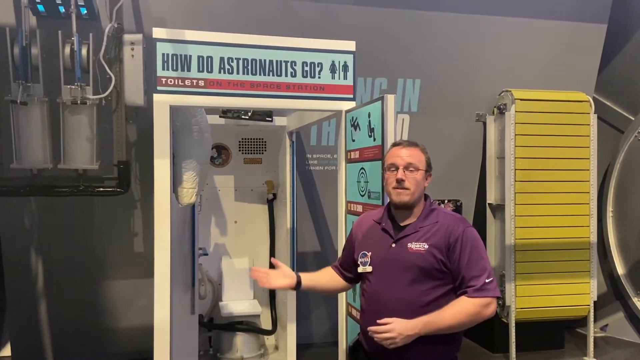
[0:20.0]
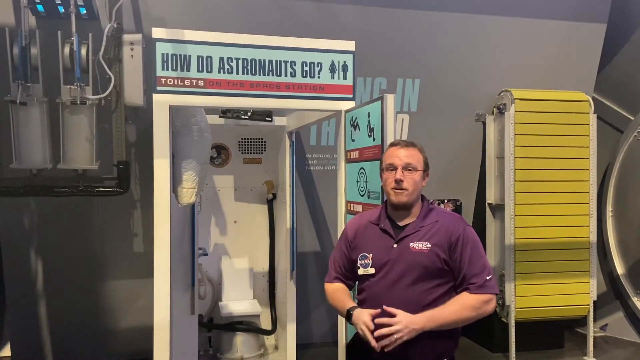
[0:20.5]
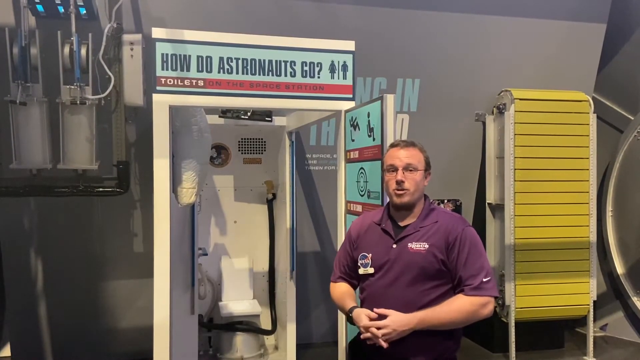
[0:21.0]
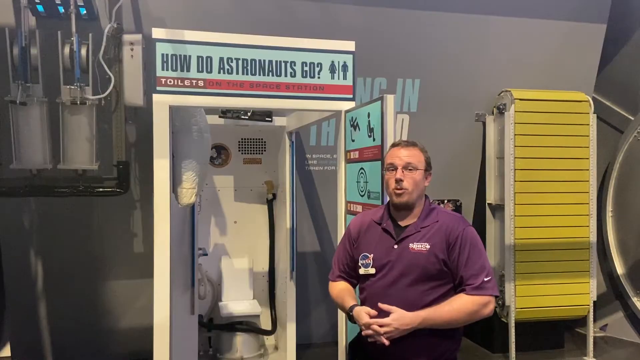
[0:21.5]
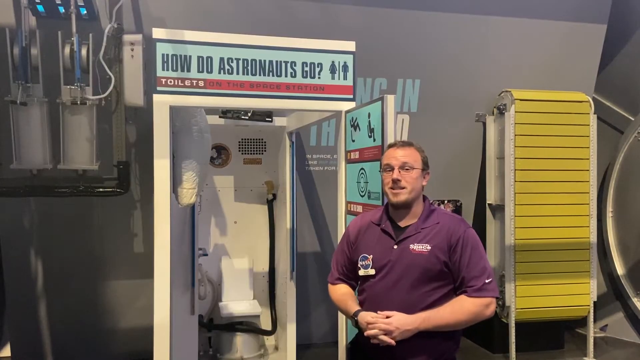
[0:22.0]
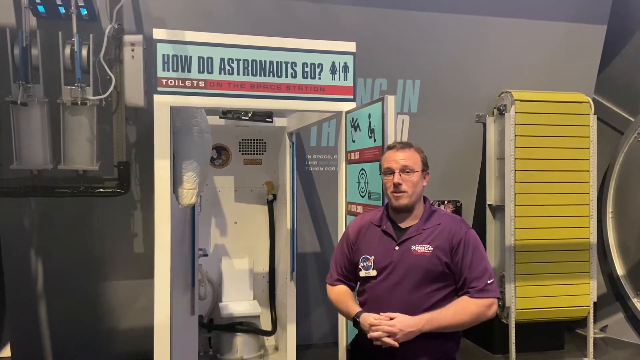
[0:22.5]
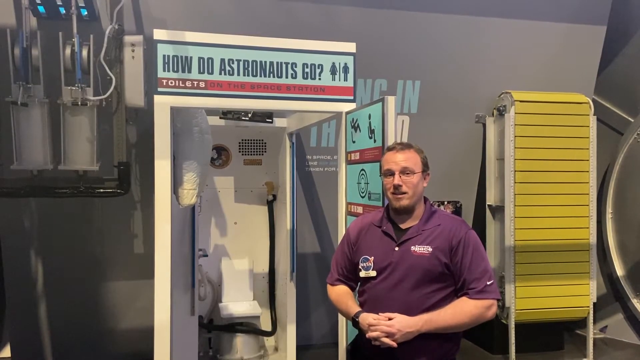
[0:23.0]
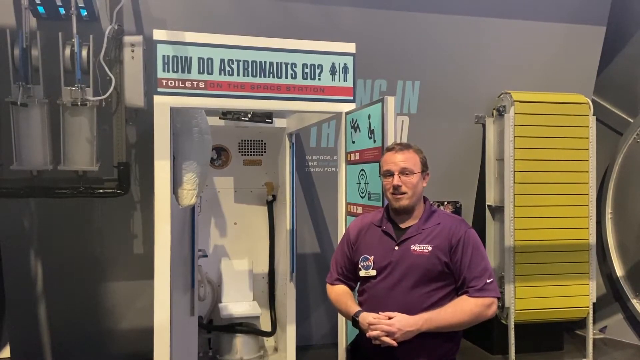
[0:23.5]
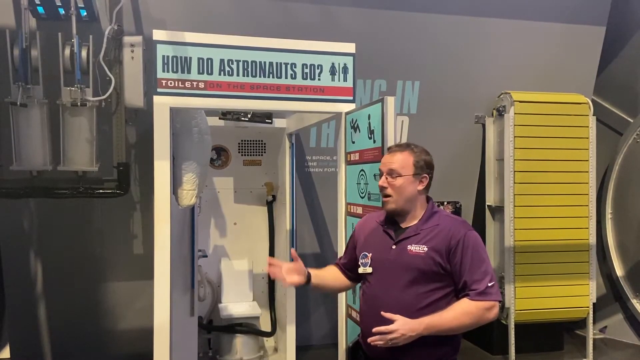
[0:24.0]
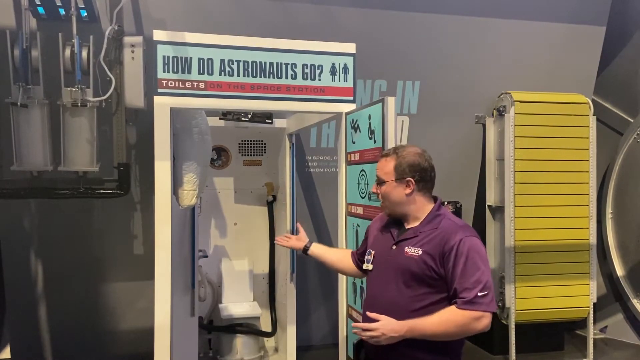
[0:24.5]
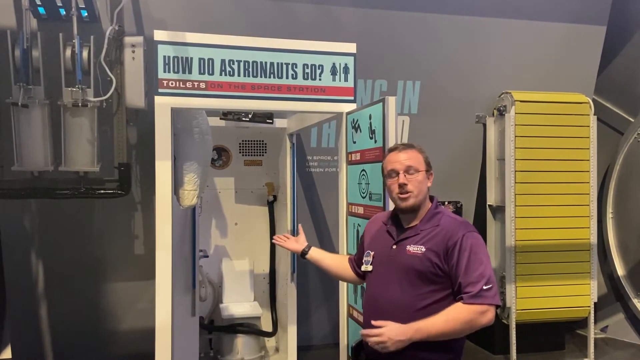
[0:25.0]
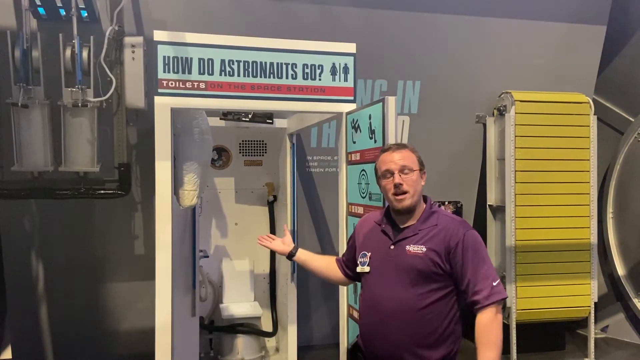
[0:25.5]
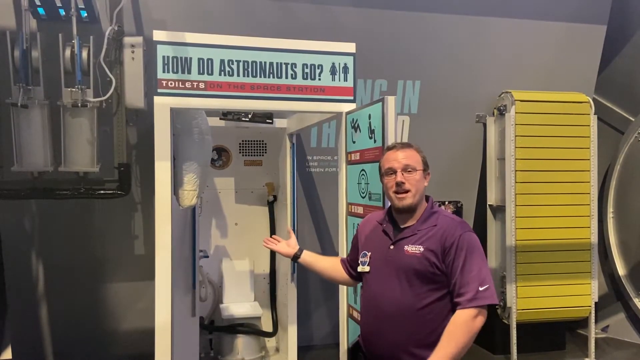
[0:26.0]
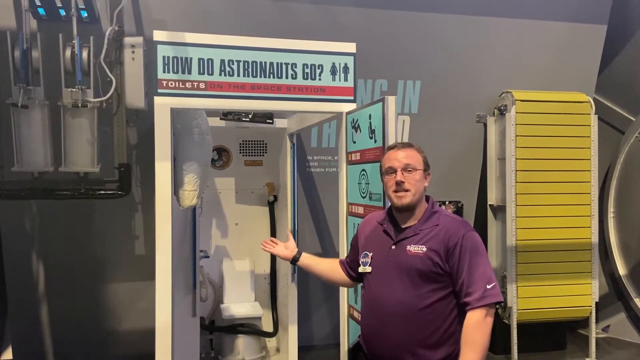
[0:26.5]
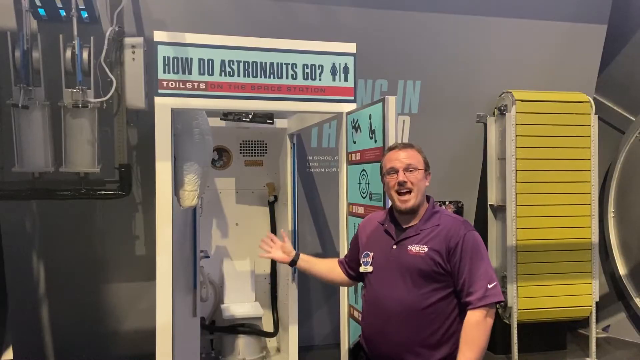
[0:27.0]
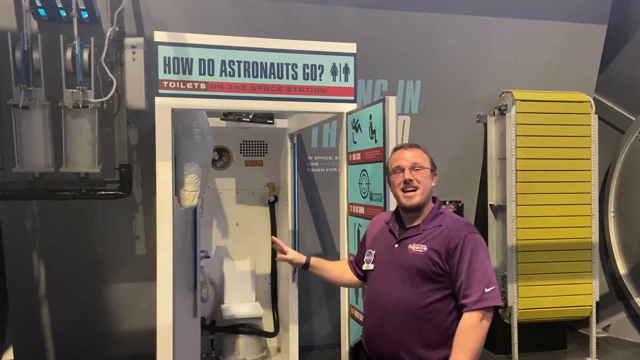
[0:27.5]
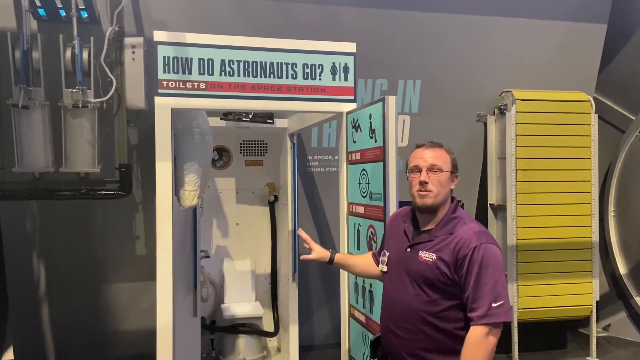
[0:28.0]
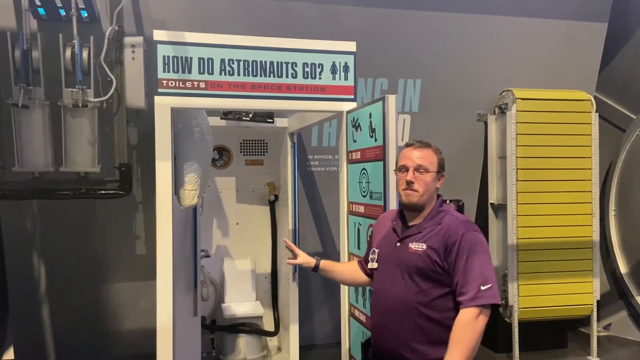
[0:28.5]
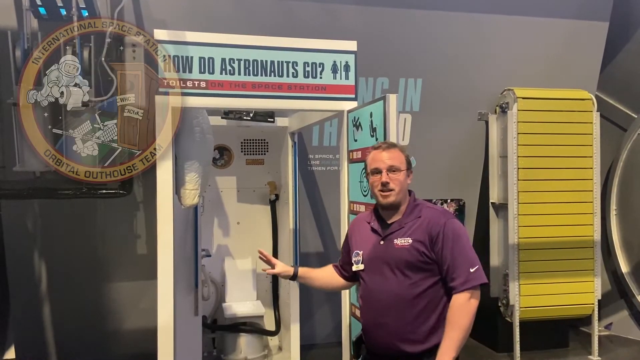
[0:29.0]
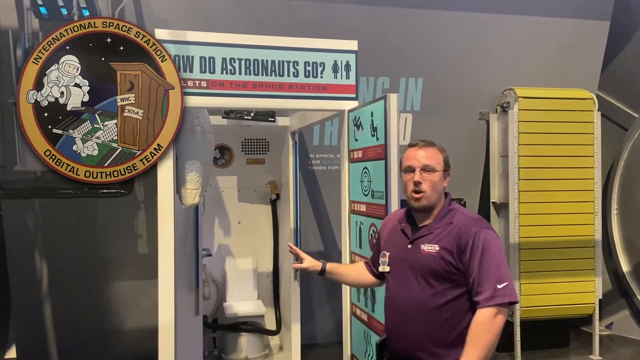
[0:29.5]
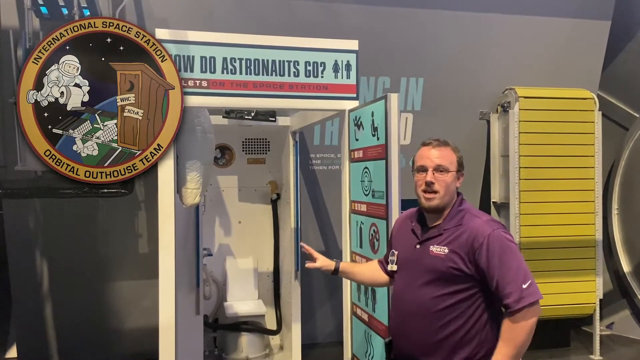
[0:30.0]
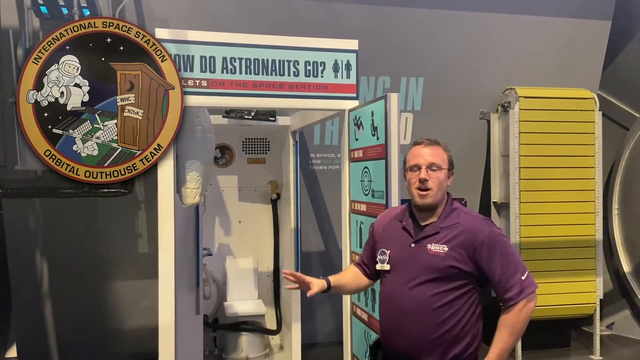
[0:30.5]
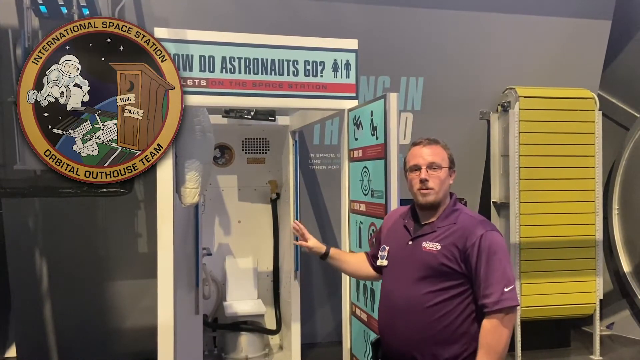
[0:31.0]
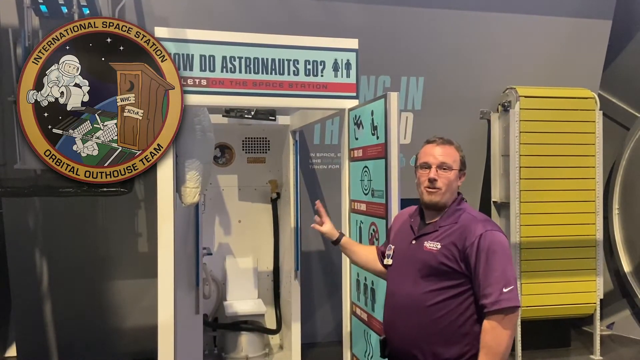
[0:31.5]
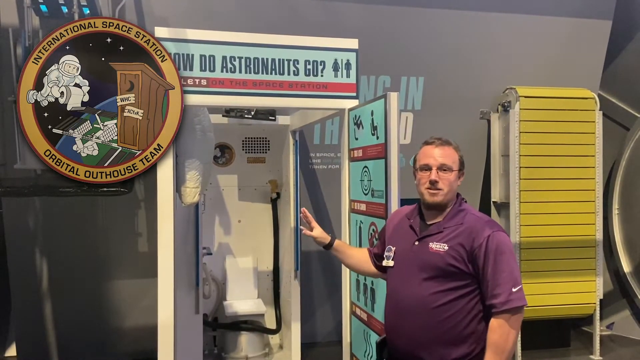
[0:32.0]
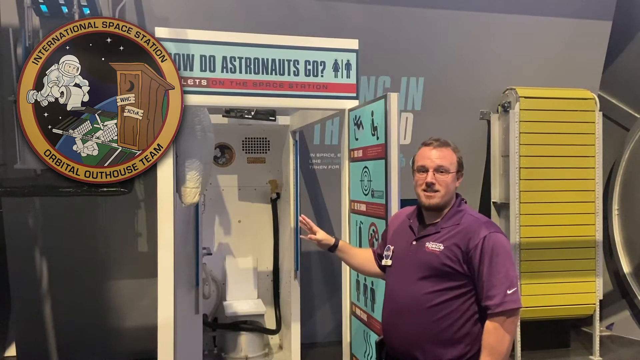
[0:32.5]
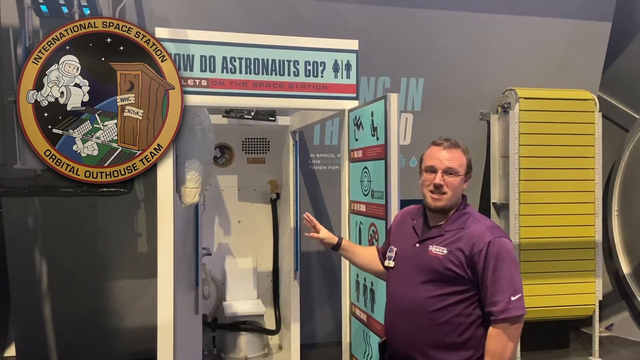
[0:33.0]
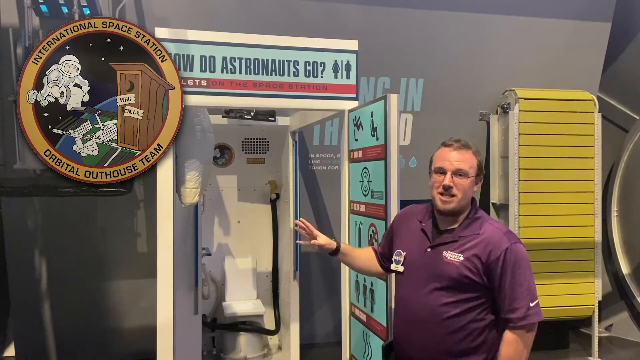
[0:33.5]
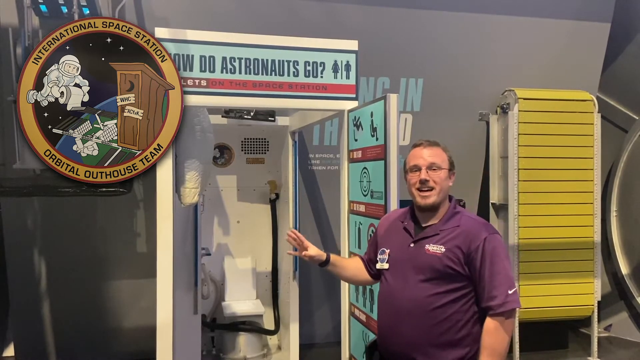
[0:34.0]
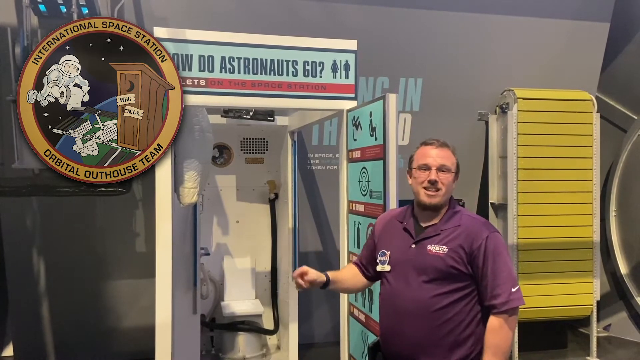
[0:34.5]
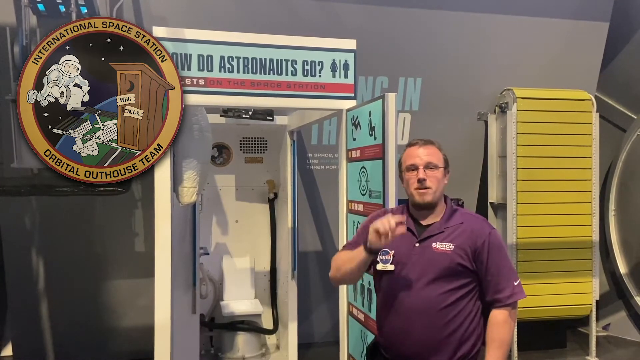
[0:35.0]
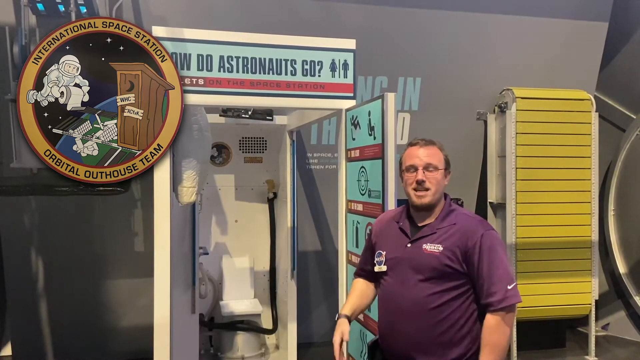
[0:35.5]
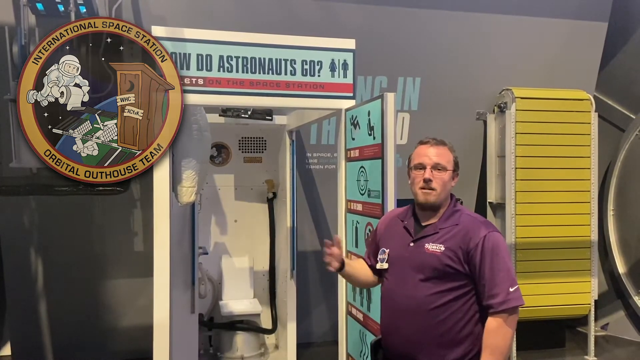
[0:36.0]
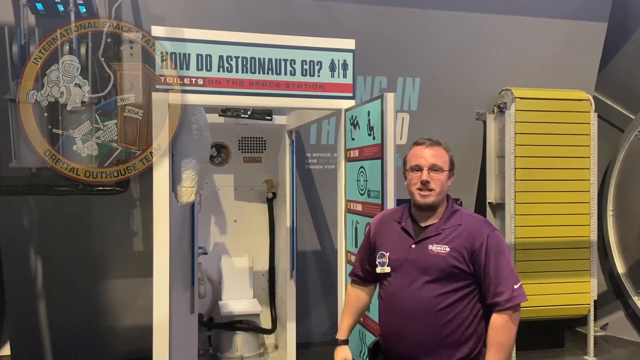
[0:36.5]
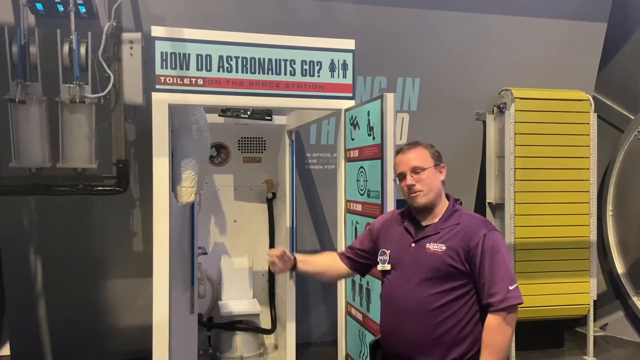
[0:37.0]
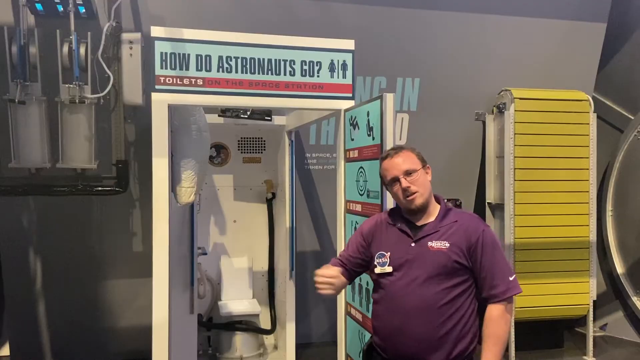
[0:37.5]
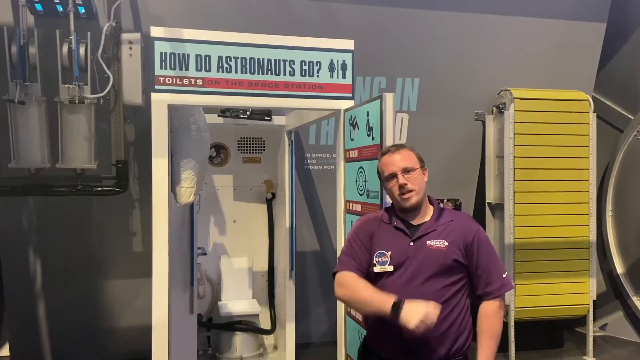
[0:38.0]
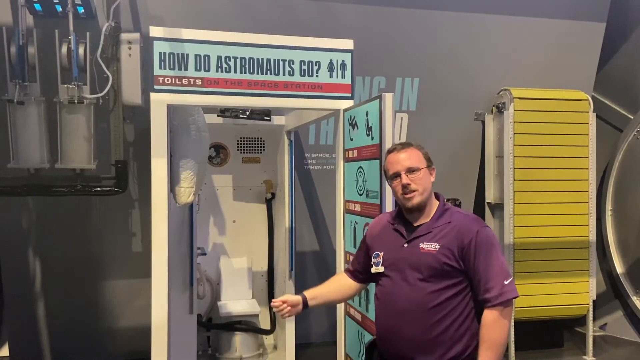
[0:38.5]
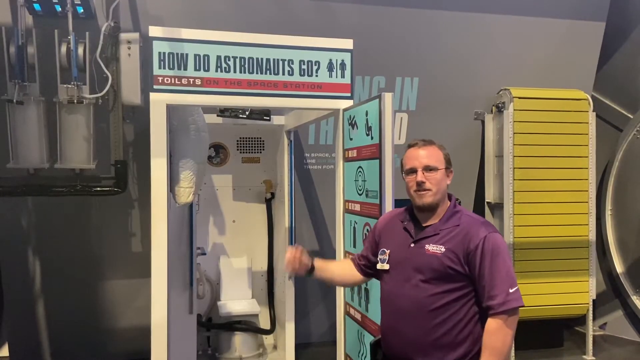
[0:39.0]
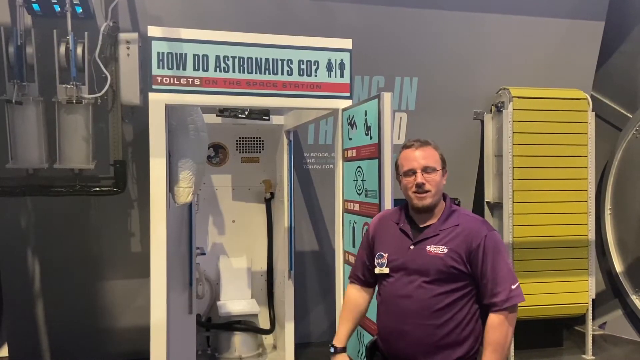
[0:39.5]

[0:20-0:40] The man continues his presentation. He has short brown hair with a receding hairline and wears a sort of purple dress shirt. On his right chest is a pin that reads "NASA." To the right is something that looks like a yellow treadmill, flipped up and almost leaning toward the wall.